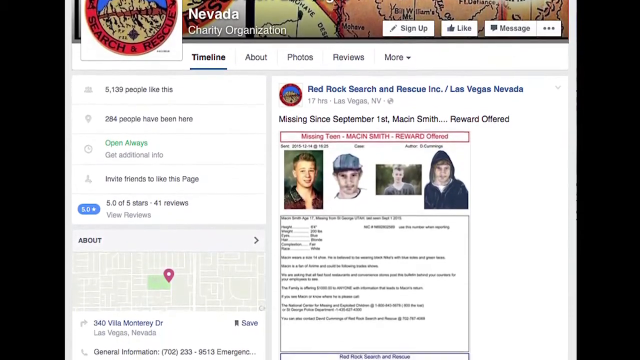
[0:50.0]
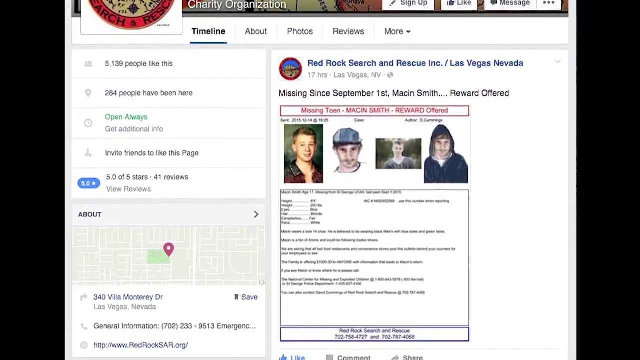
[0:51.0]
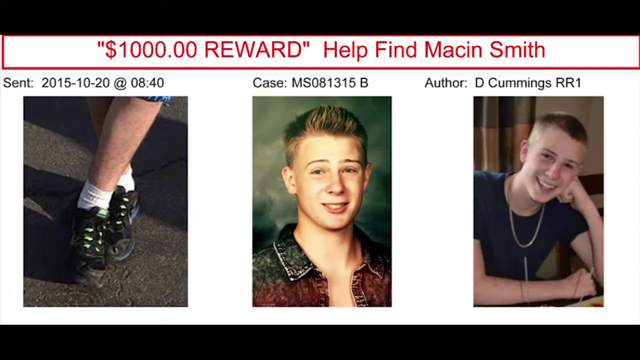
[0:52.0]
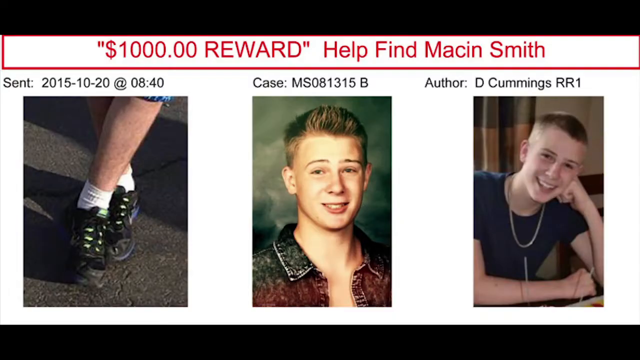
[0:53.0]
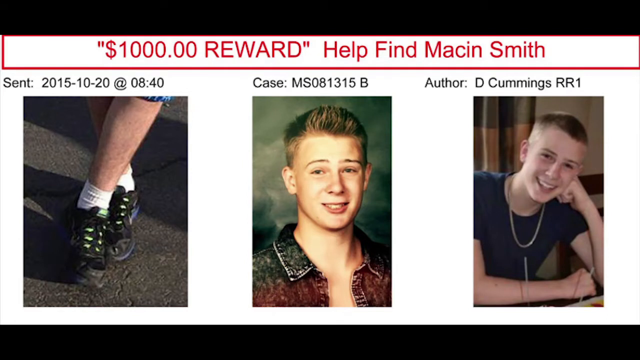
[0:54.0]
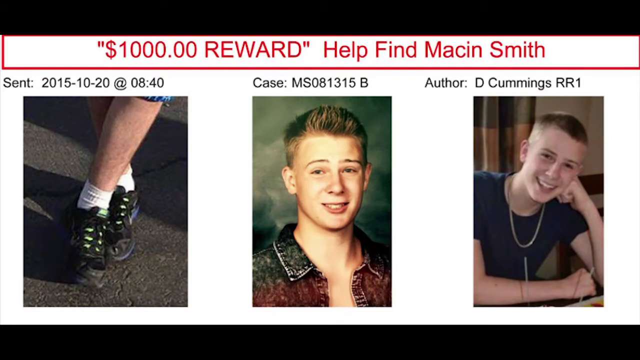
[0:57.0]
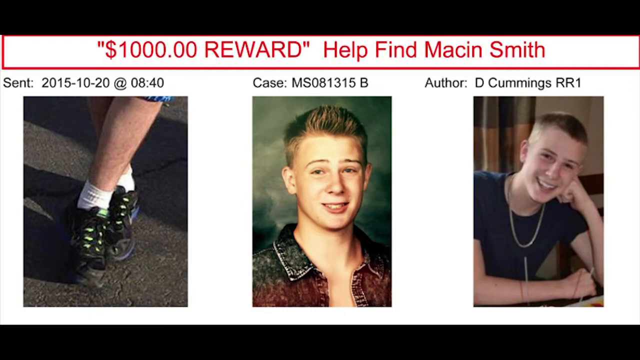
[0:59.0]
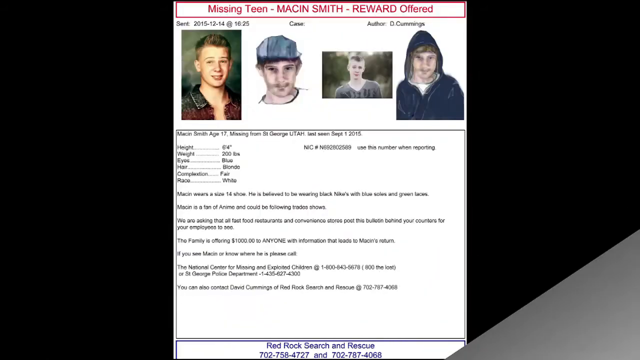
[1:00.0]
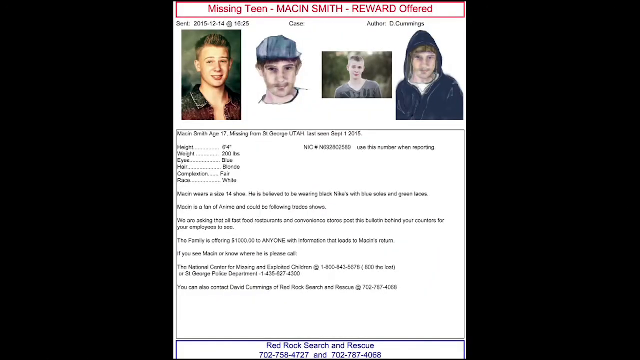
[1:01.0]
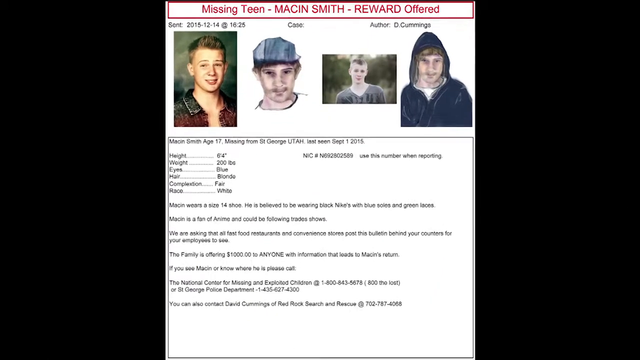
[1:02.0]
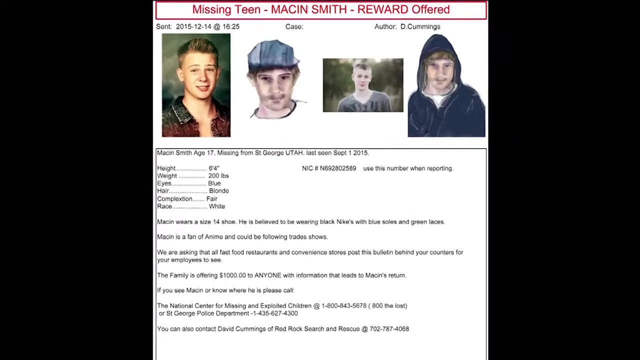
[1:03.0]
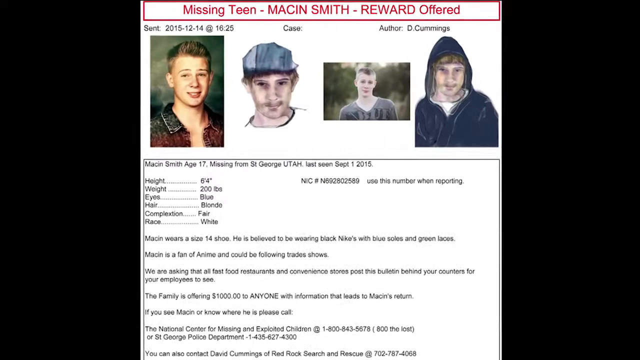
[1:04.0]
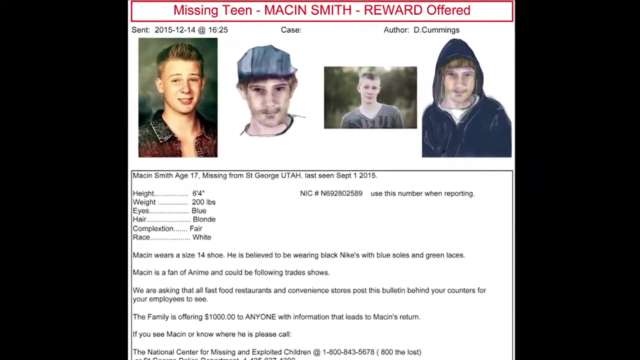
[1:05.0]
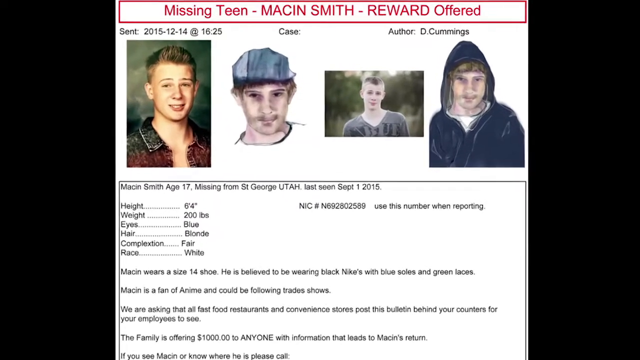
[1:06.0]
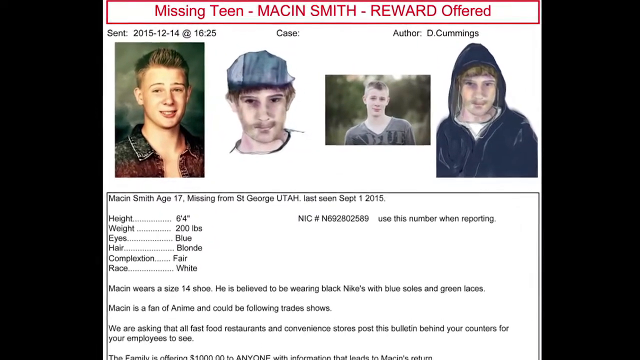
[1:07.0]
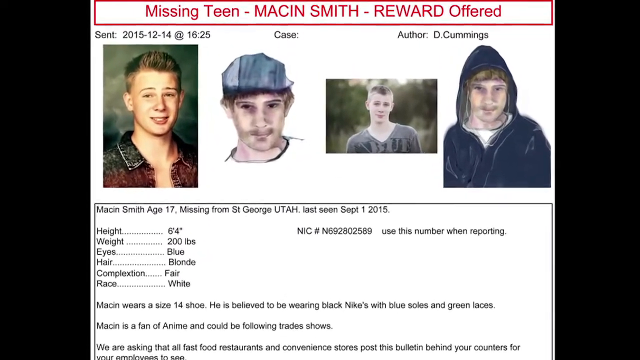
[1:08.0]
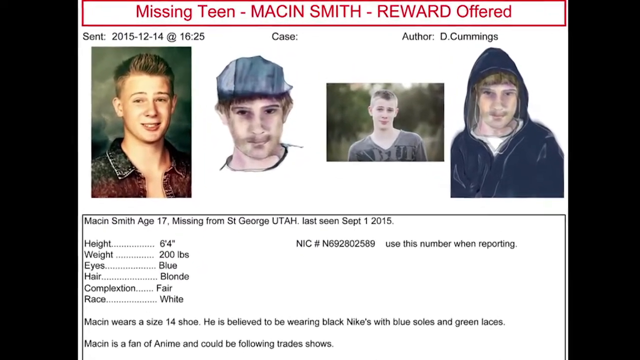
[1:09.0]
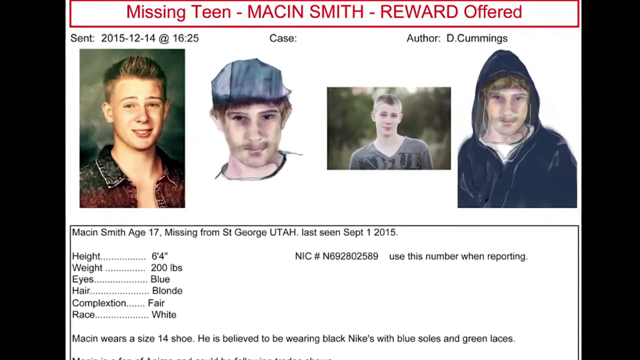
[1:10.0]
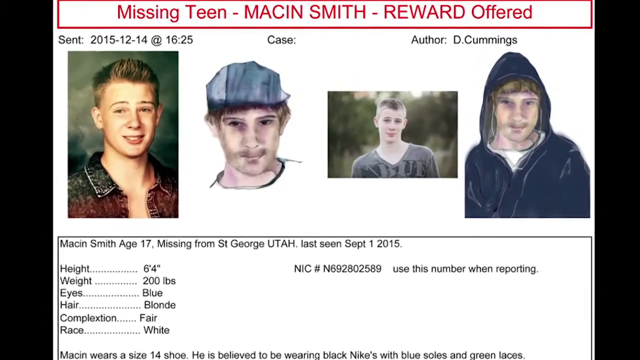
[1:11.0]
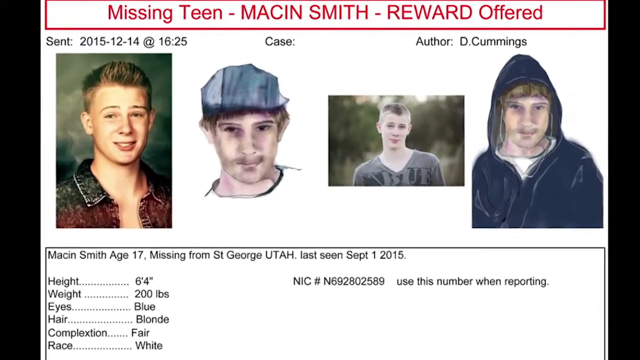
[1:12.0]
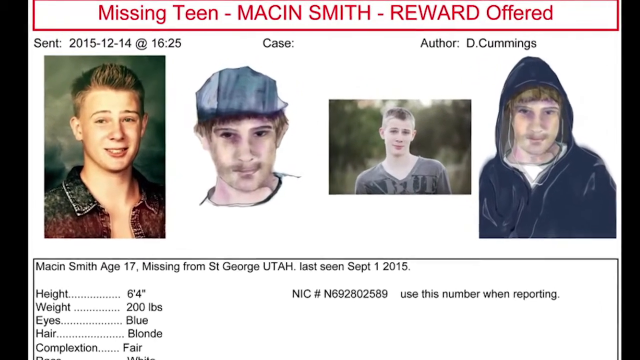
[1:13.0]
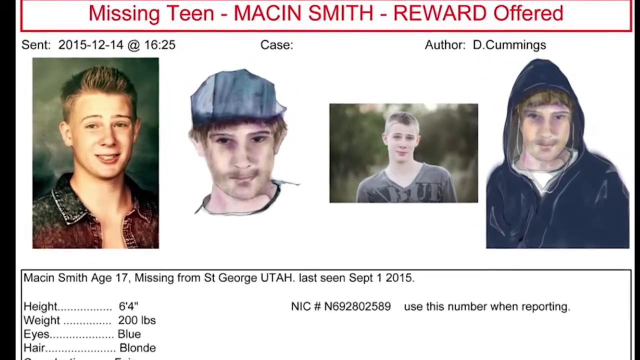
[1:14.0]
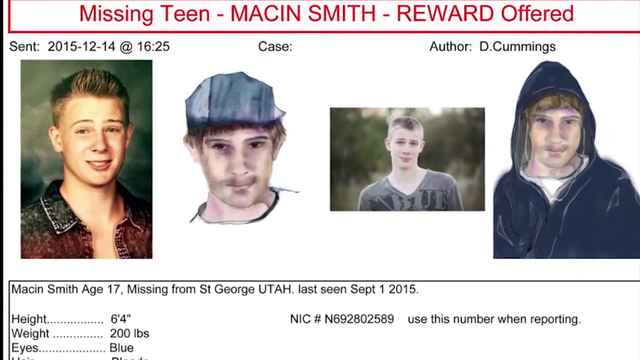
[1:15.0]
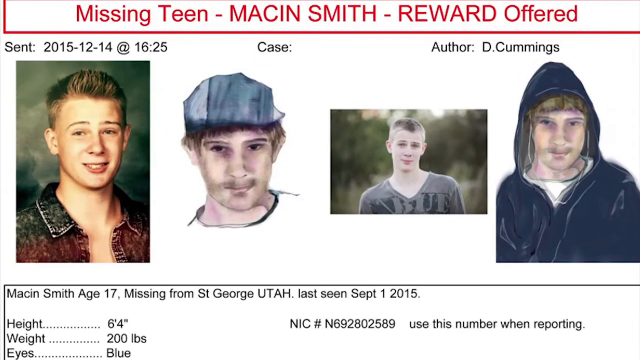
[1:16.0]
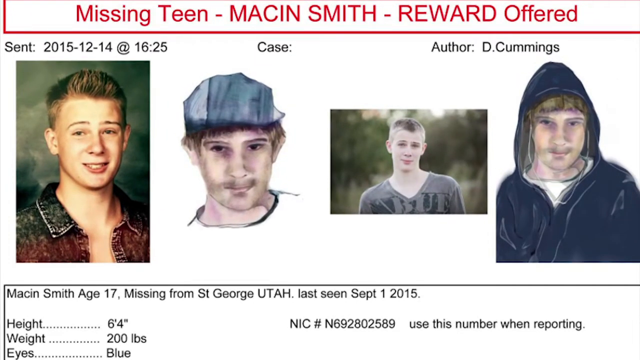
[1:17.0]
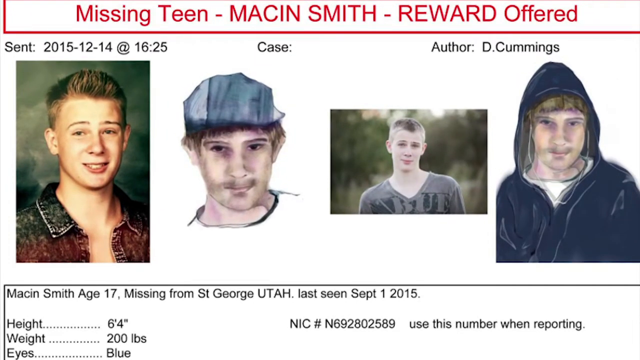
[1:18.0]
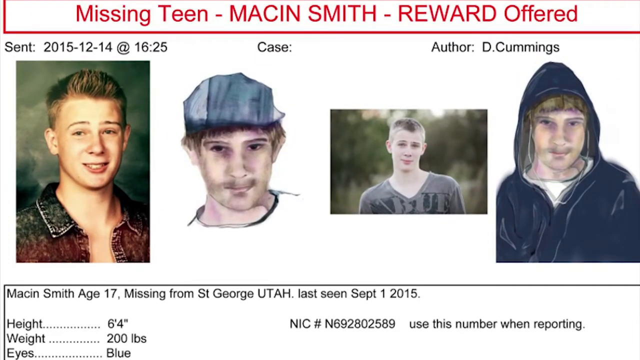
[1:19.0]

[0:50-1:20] The Facebook page of Red Rock Search and Rescue Incorporated, located in Las Vegas, Nevada, is shown. A poster with the missing boy's particulars now offers a $1,000 reward for help finding him and carries the case number MS081315. This item appears to have been sent on October 20th. The boy looks like a gregarious young man with a good sense of humor. The view zooms in on his missing poster, which lists his particulars; this poster was sent on December 14th.